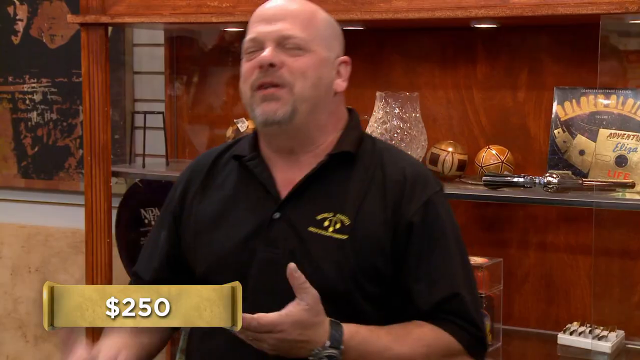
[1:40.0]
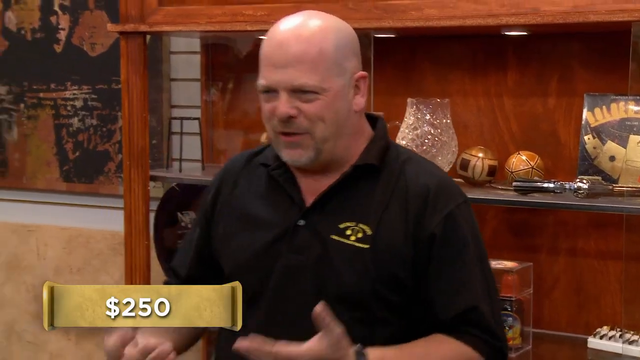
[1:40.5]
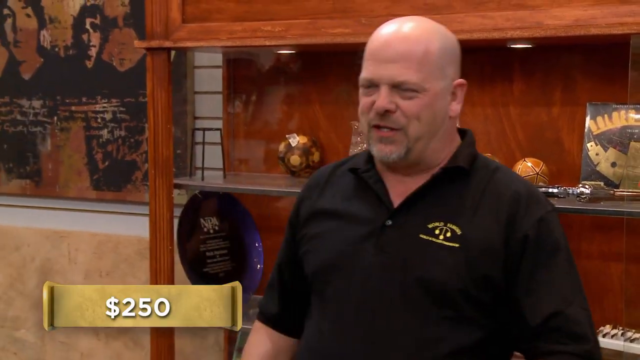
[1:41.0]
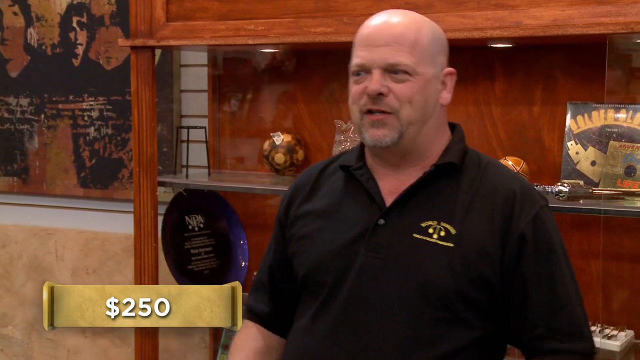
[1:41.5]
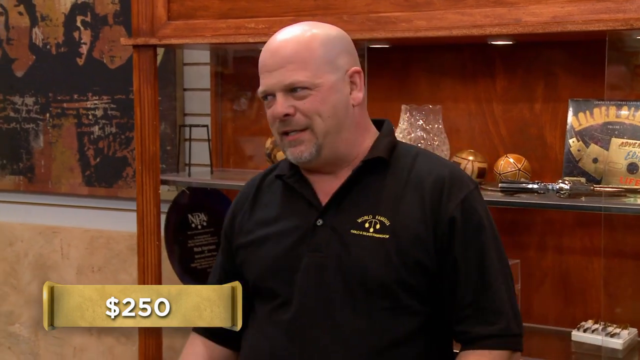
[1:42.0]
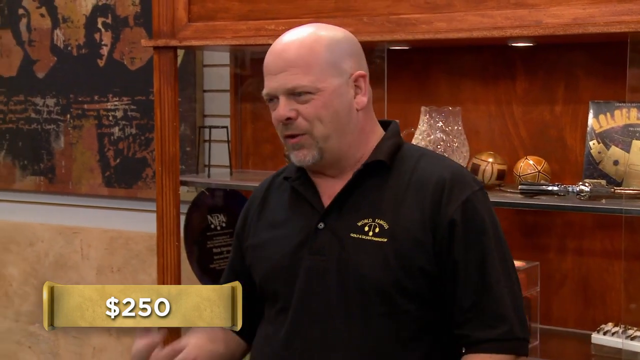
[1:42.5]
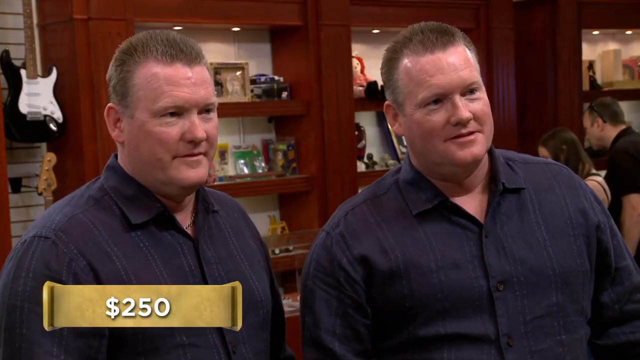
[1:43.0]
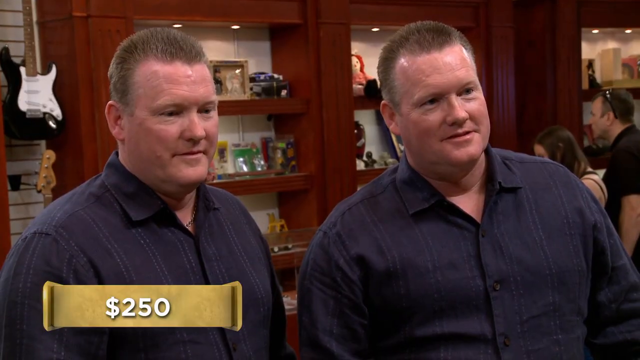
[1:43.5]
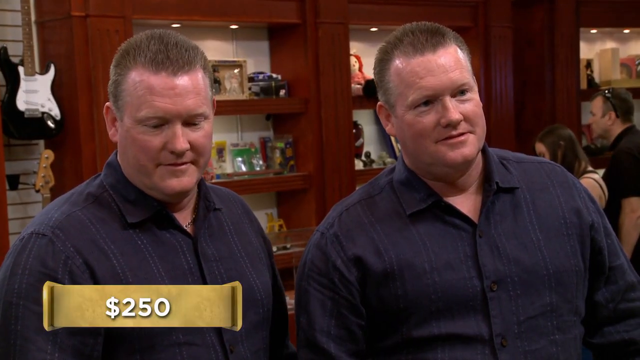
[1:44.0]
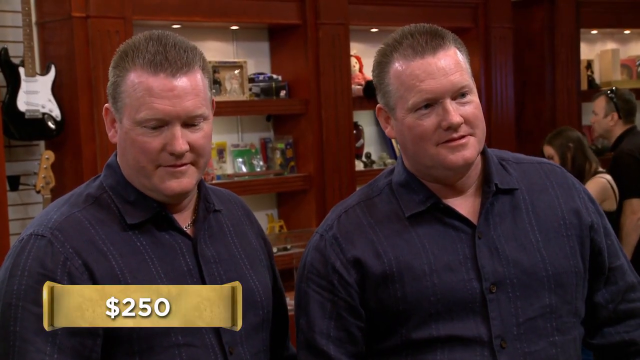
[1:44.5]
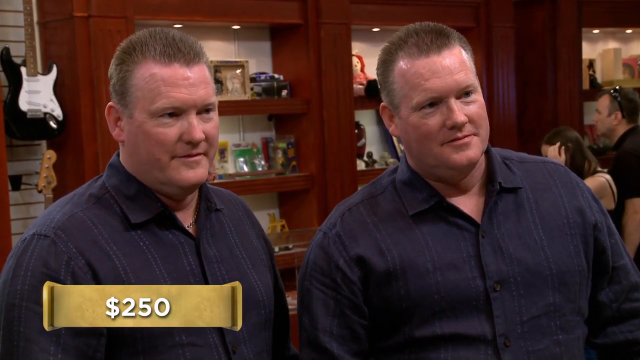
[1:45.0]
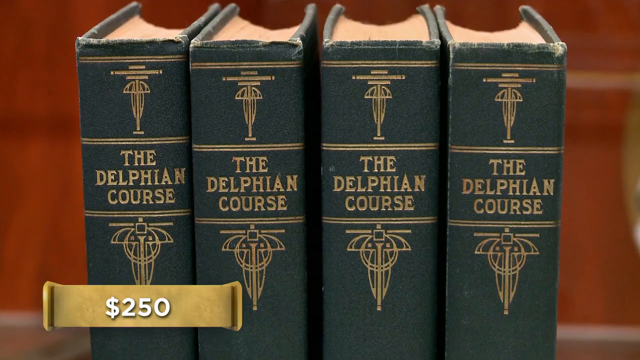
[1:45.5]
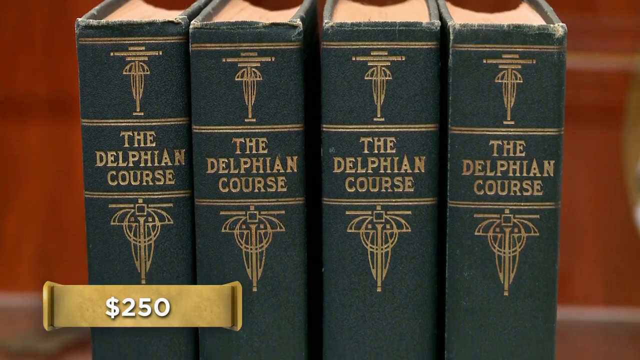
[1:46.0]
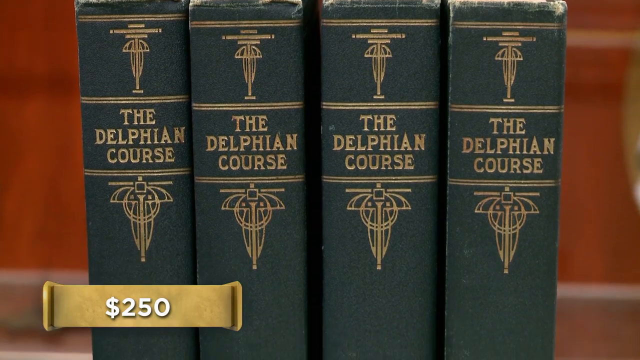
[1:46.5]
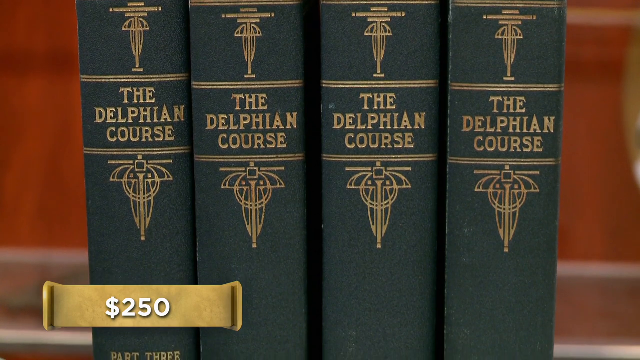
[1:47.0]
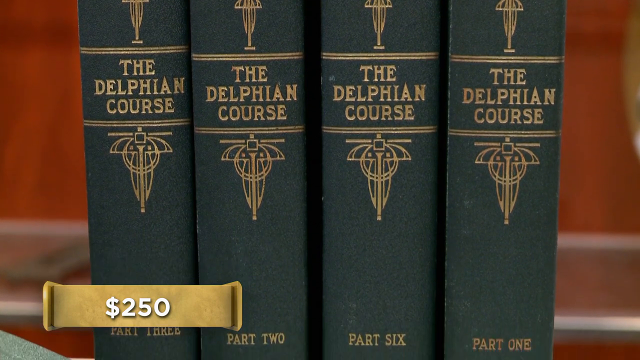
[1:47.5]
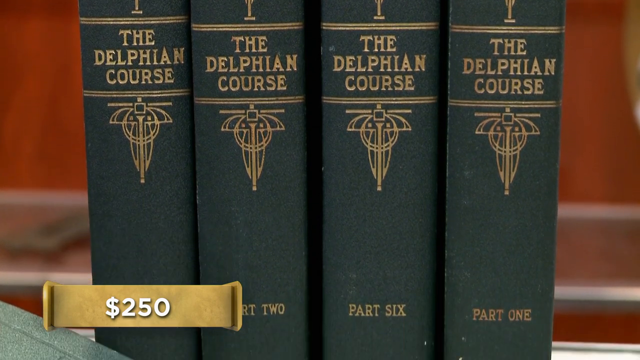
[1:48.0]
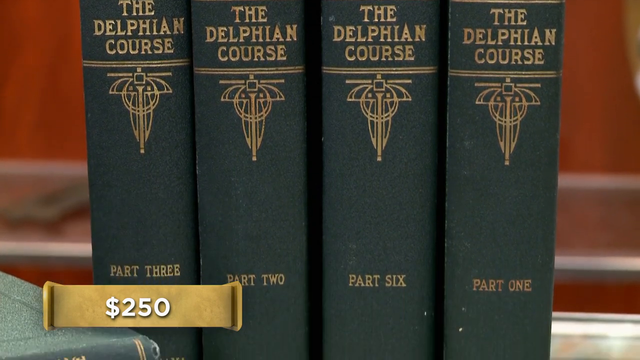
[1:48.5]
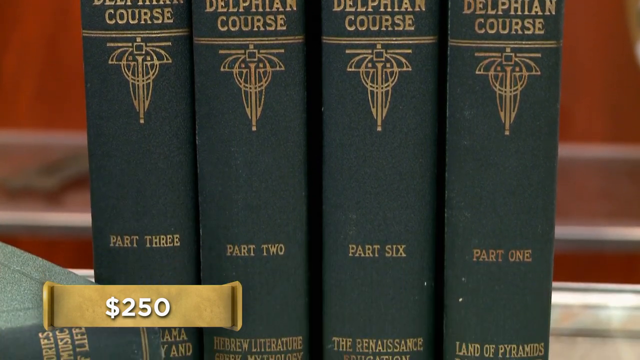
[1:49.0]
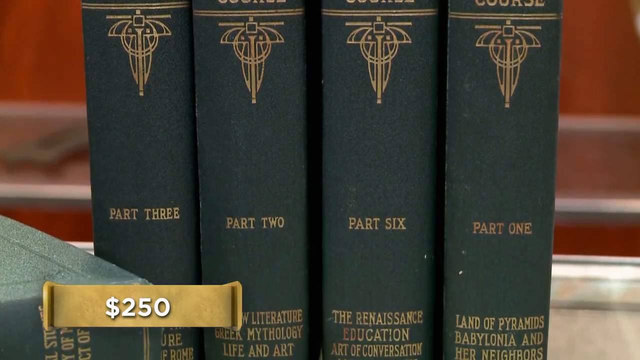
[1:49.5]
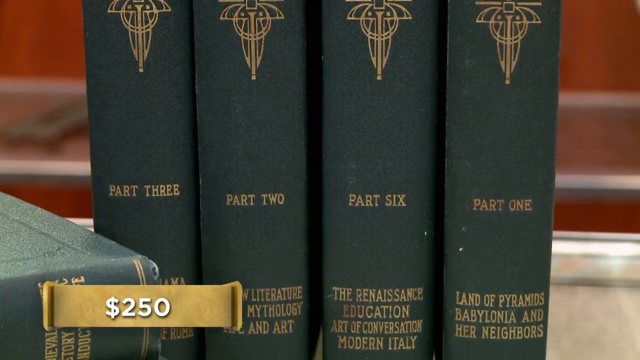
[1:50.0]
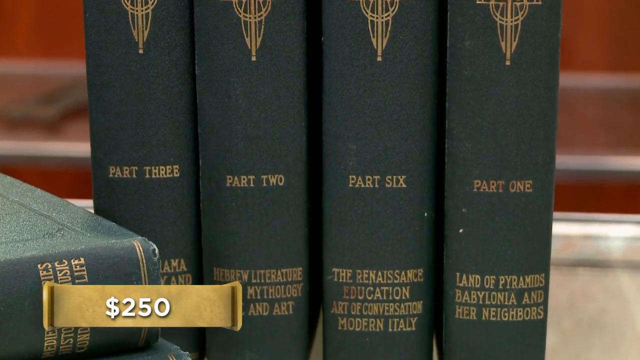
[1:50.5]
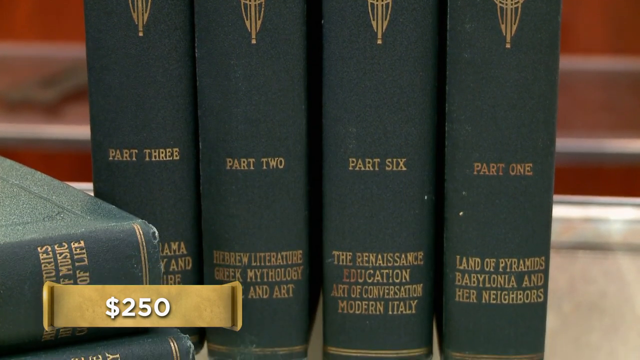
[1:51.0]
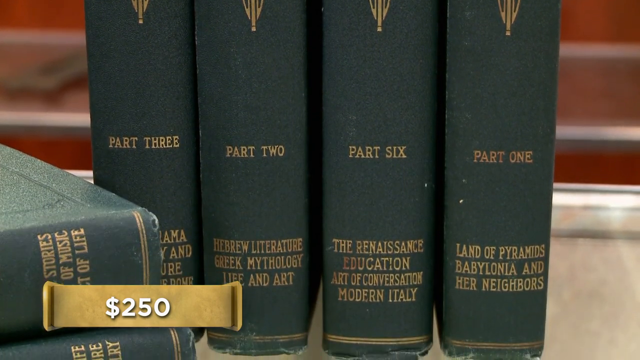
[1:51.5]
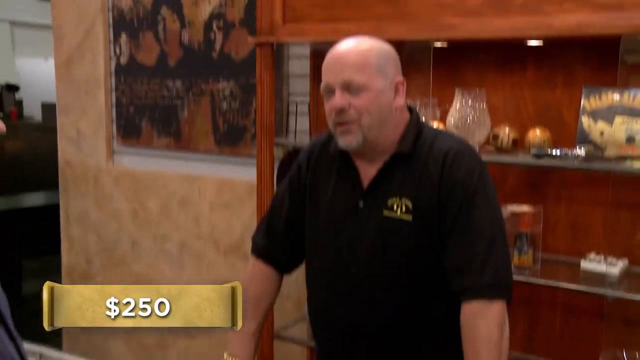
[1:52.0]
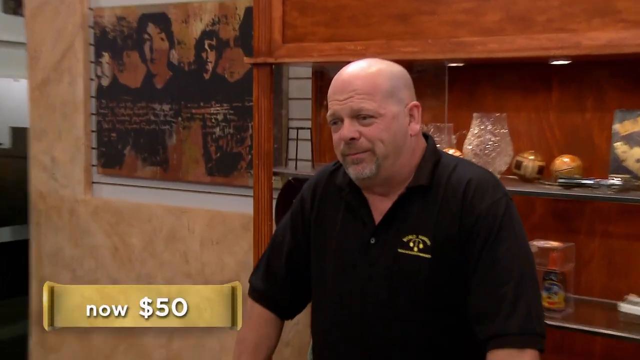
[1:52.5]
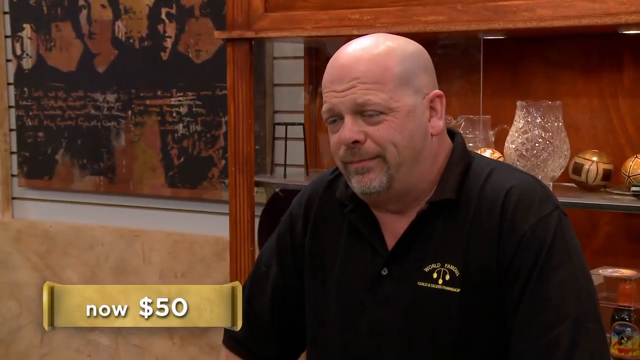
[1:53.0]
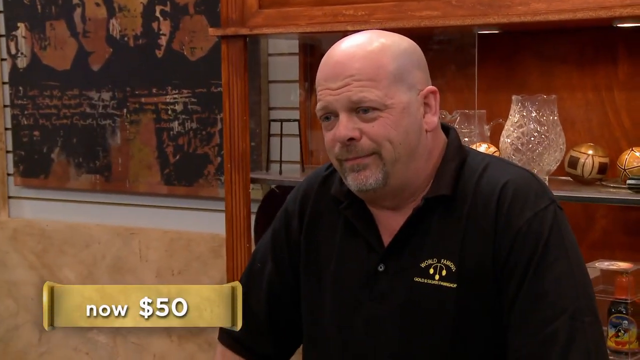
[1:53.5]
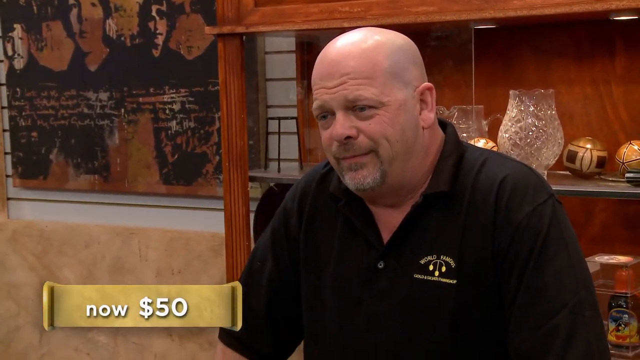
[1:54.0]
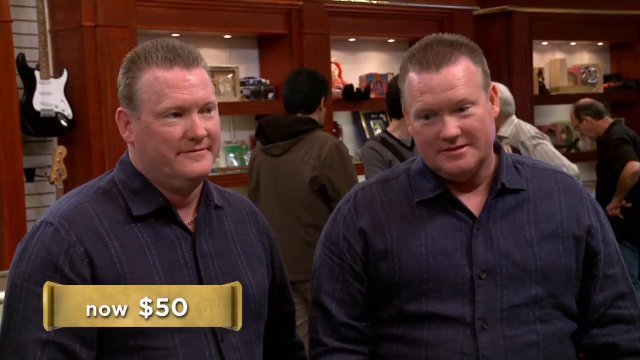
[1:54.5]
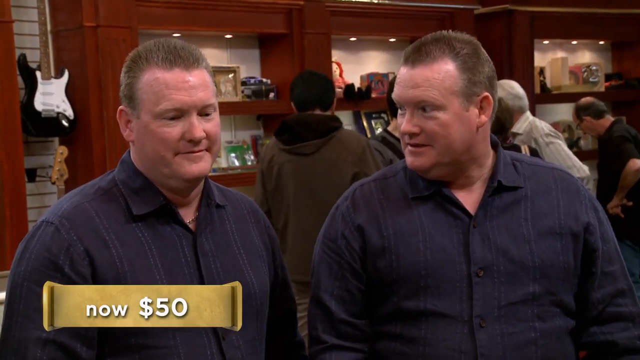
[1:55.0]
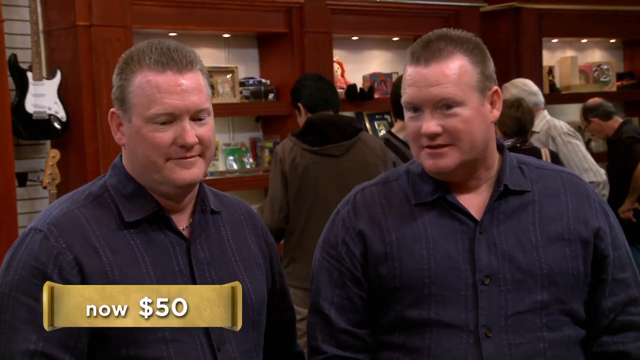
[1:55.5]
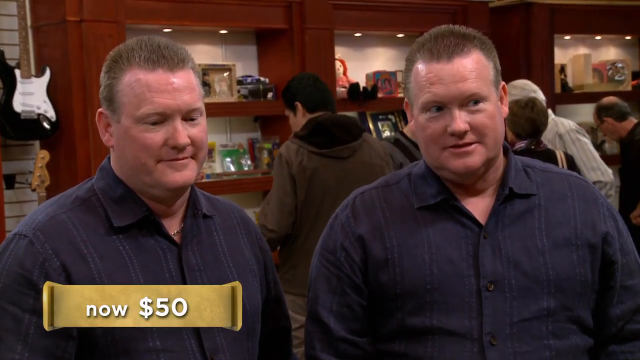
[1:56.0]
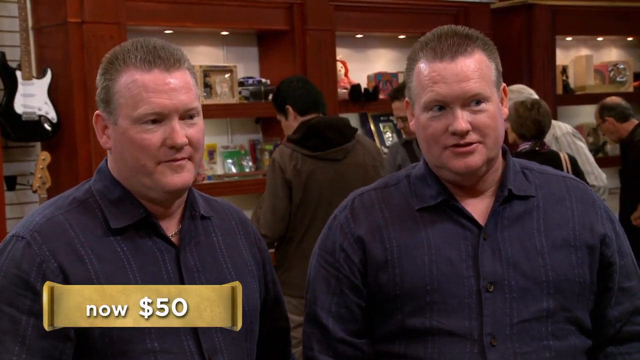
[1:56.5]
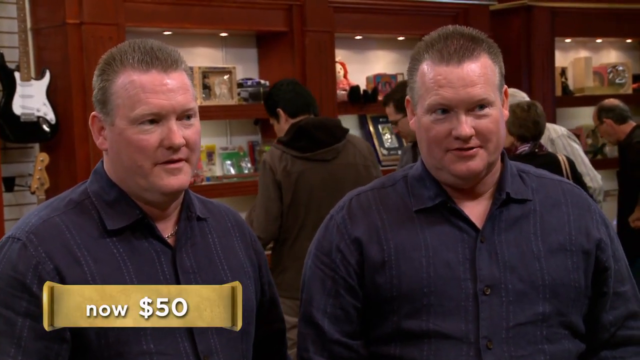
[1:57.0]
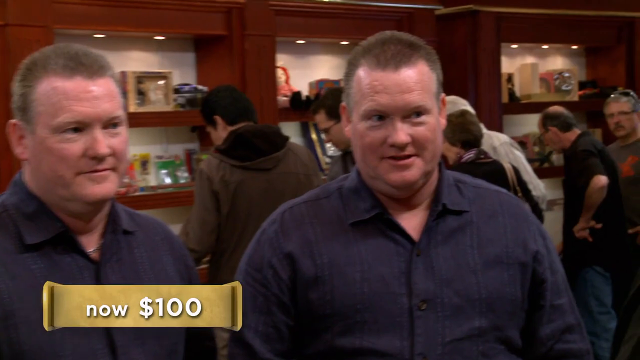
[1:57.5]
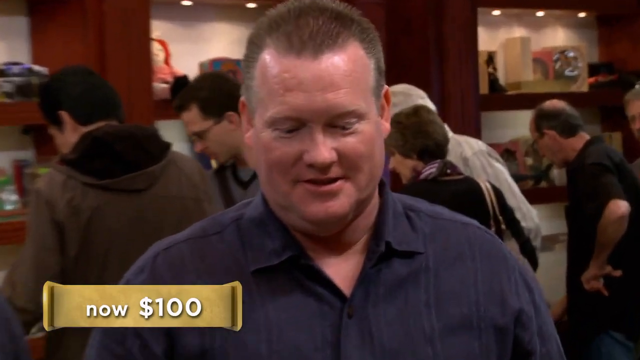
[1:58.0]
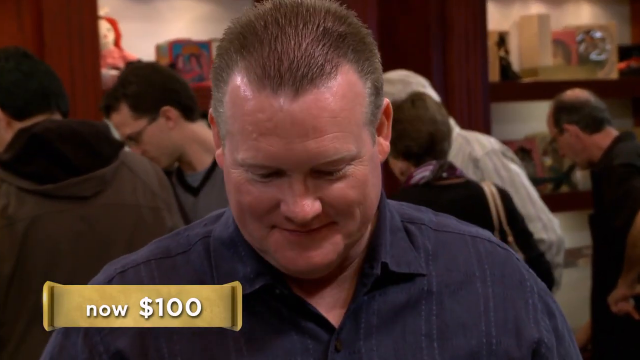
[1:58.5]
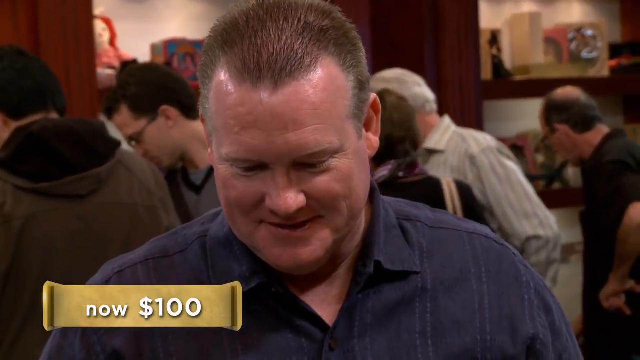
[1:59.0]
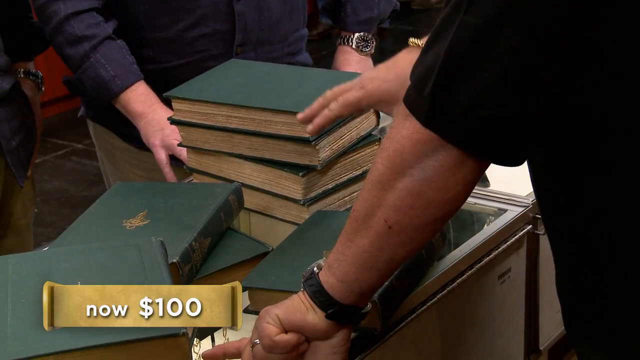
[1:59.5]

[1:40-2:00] The man behind the counter in the short black shirt keeps talking while the value of 250 remains on screen. Derek and Eric look more pensive and have lost their smiles. The camera moves in close-up over the green Delphian Course books, which have Delphian Course written on their spines and, under the title, some sort of design in a yellowy gold colour; it is unclear what it is, possibly a butterfly, a plant or a mathematical-type symbol. The camera moves down to the titles, then the video cuts back to the man in the short black shirt, still talking to Derek and Eric. A close-up of one of the brothers follows, and the value on screen has gone down to 100.